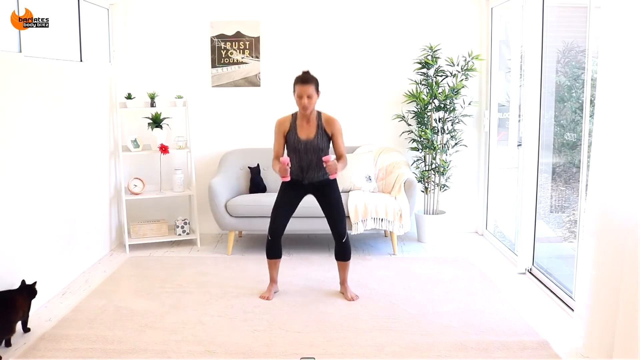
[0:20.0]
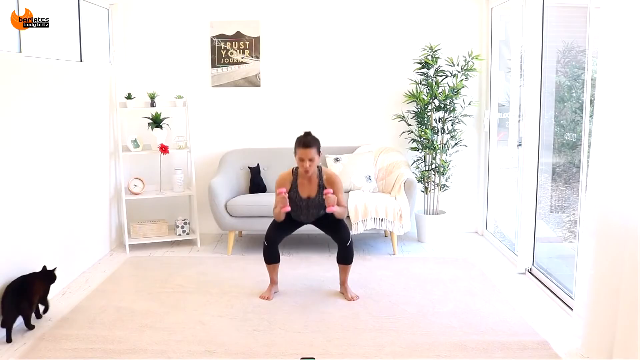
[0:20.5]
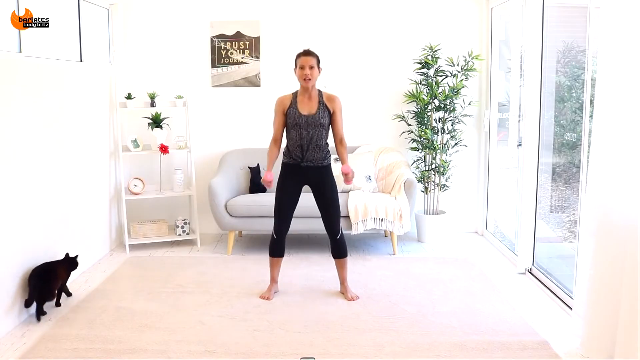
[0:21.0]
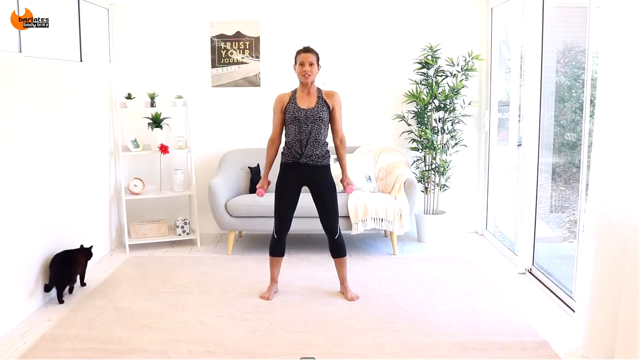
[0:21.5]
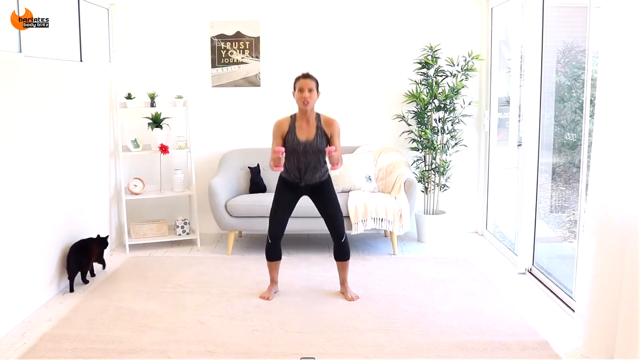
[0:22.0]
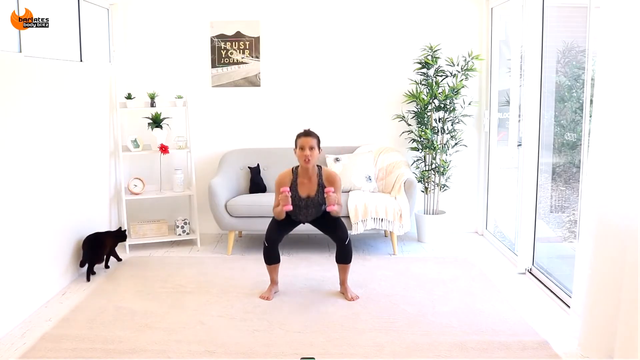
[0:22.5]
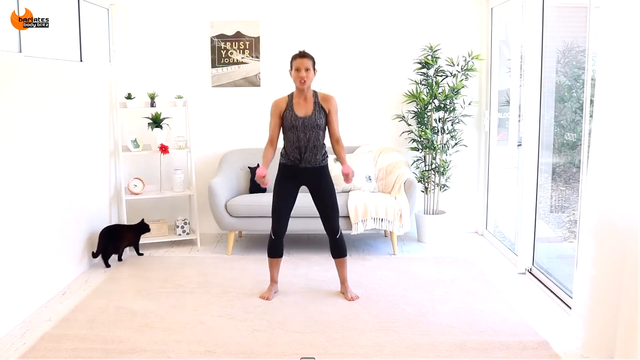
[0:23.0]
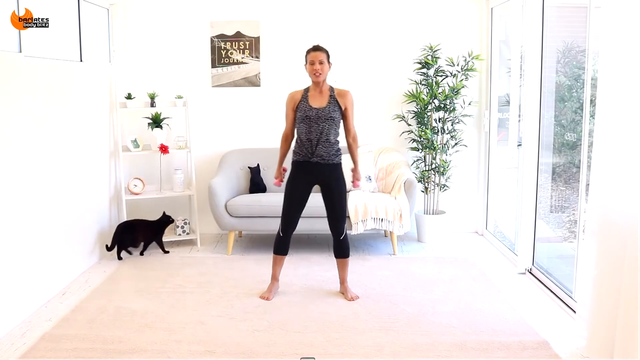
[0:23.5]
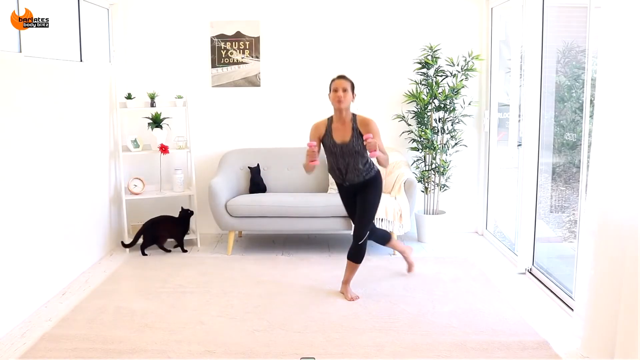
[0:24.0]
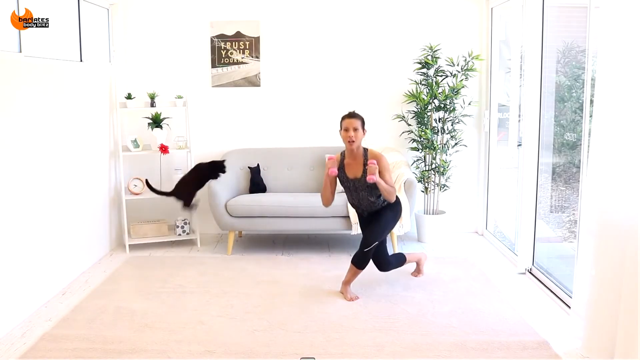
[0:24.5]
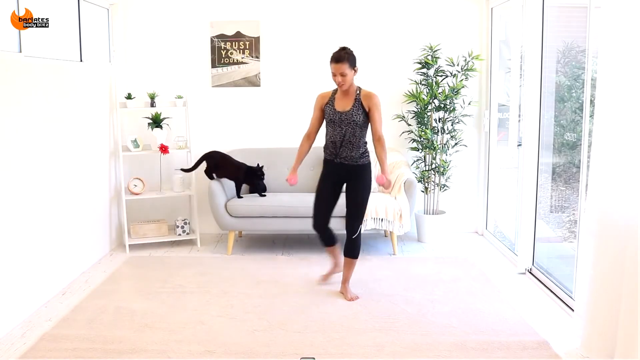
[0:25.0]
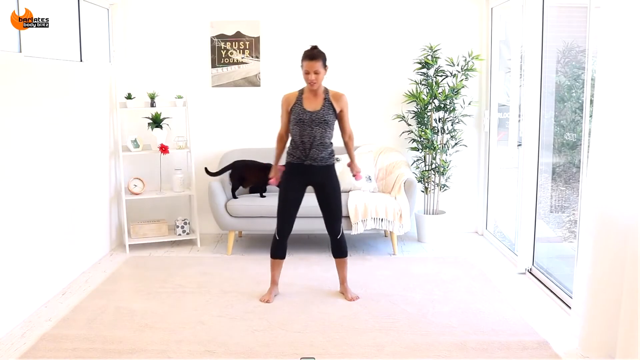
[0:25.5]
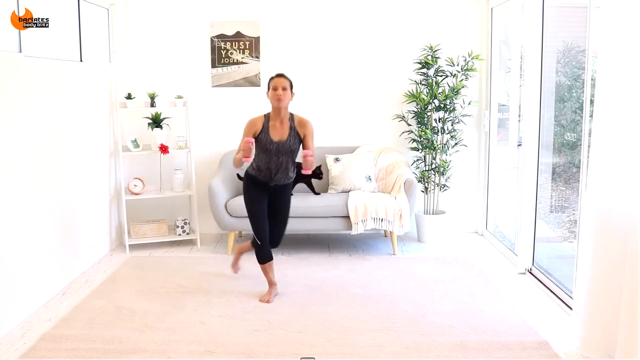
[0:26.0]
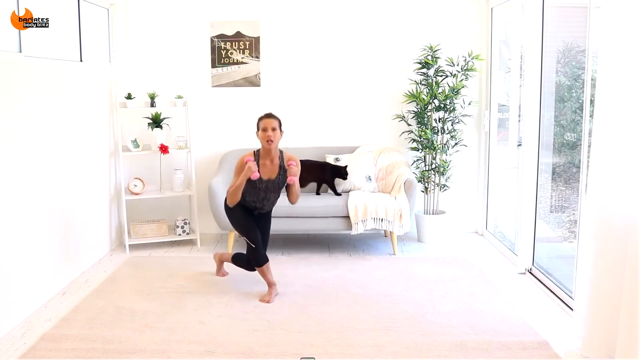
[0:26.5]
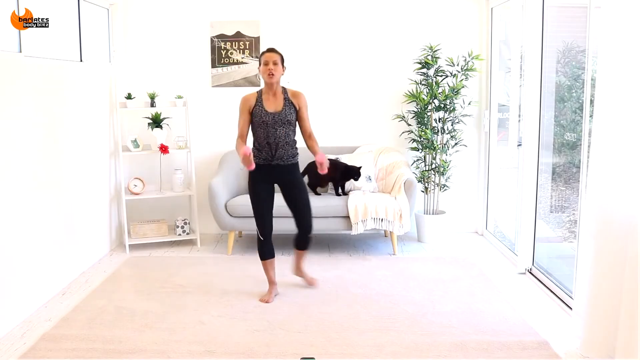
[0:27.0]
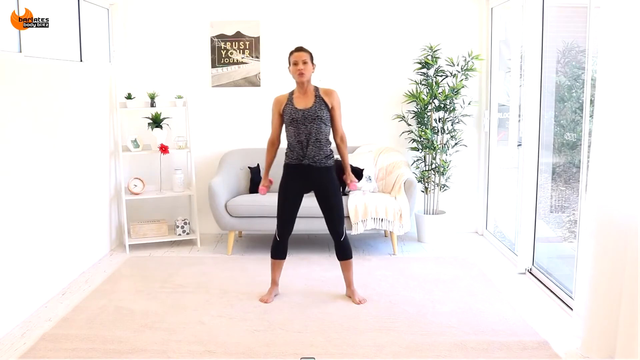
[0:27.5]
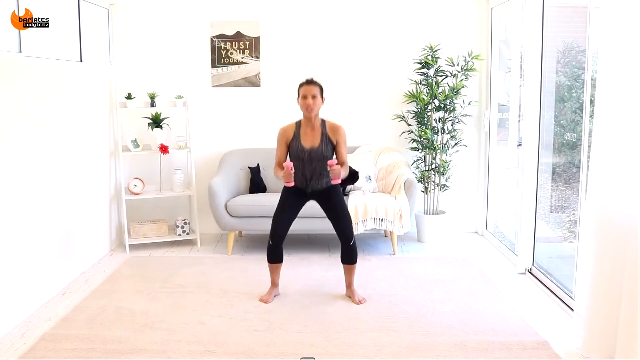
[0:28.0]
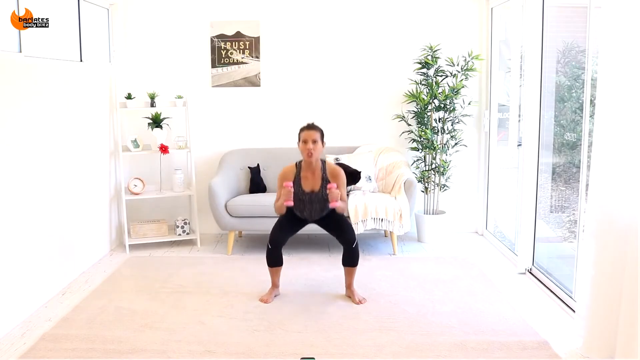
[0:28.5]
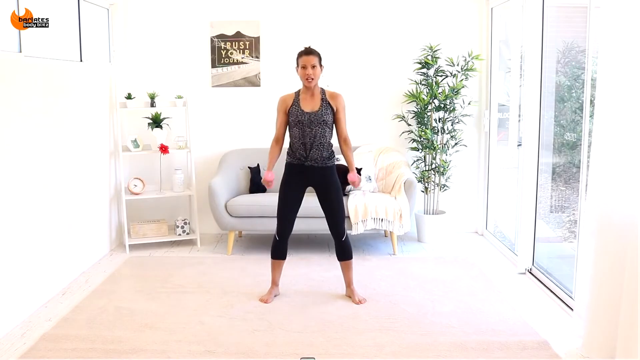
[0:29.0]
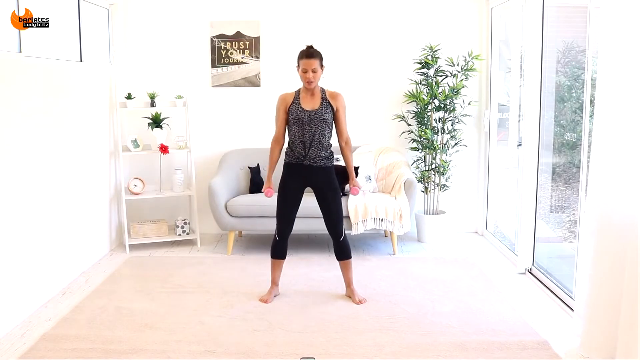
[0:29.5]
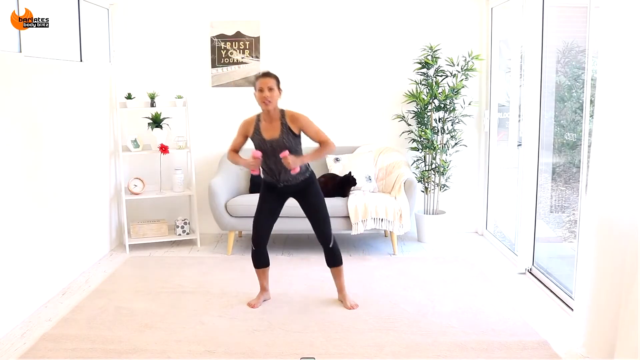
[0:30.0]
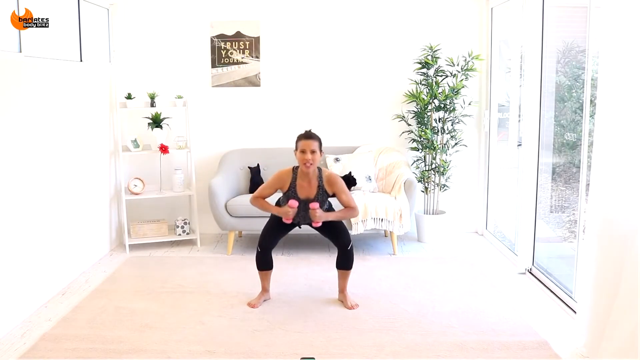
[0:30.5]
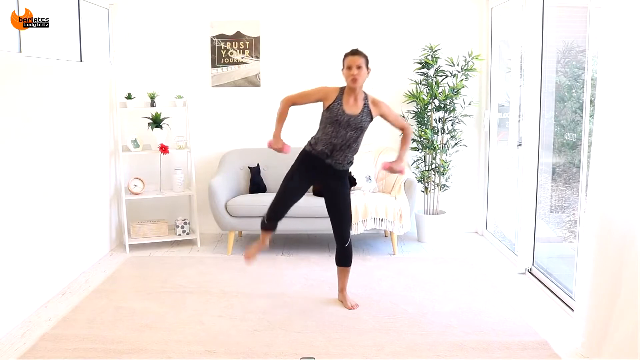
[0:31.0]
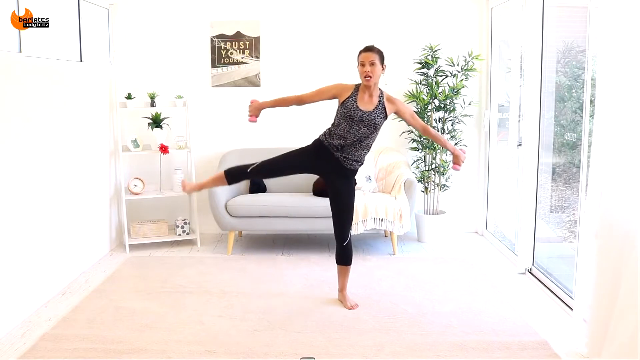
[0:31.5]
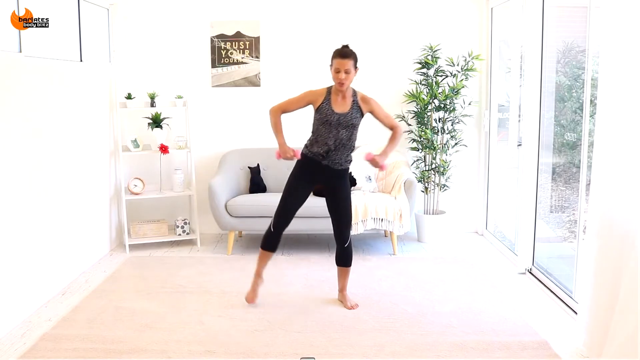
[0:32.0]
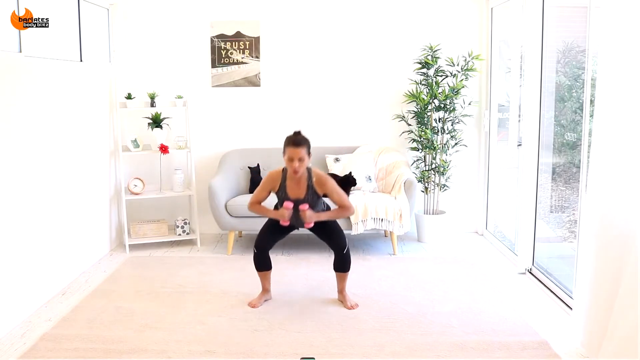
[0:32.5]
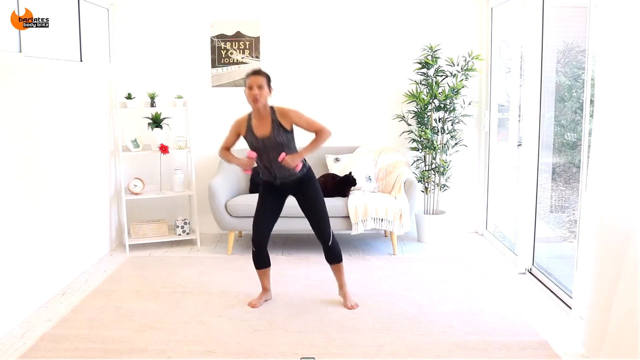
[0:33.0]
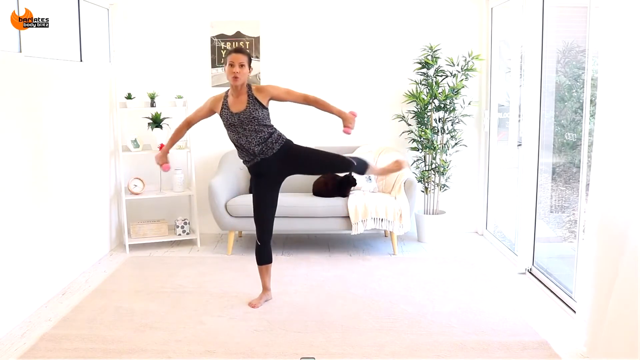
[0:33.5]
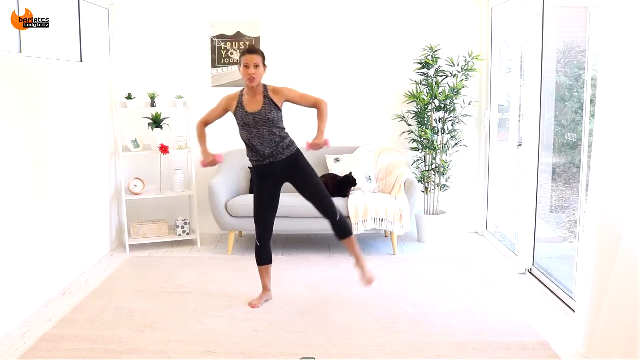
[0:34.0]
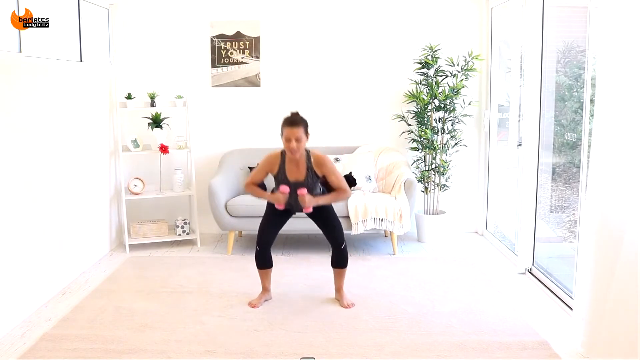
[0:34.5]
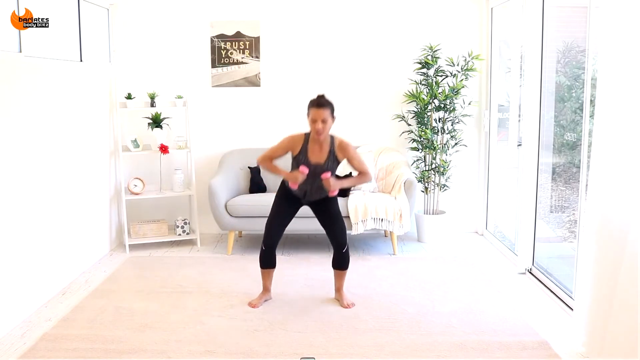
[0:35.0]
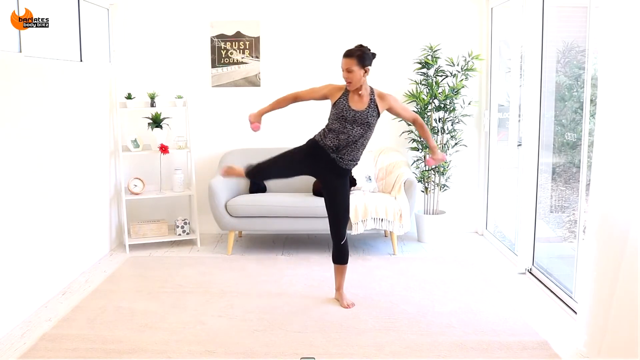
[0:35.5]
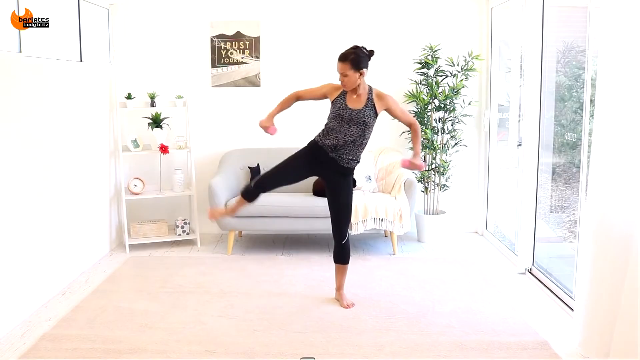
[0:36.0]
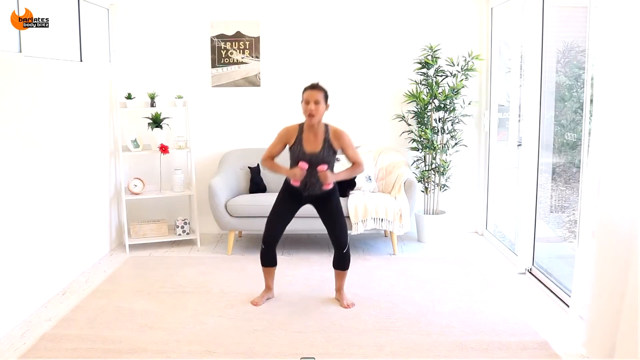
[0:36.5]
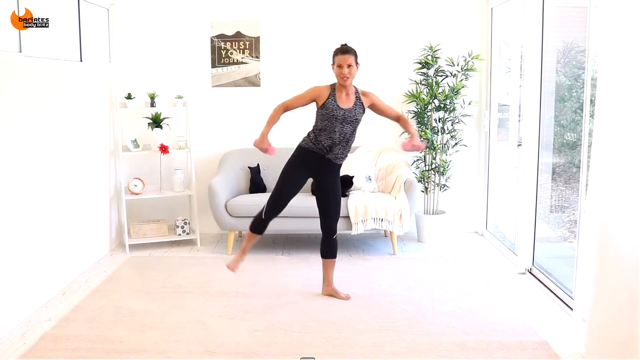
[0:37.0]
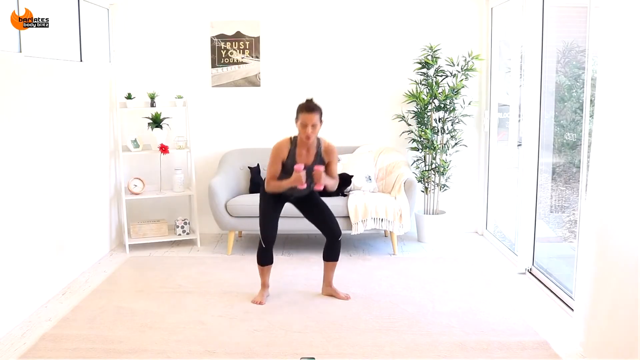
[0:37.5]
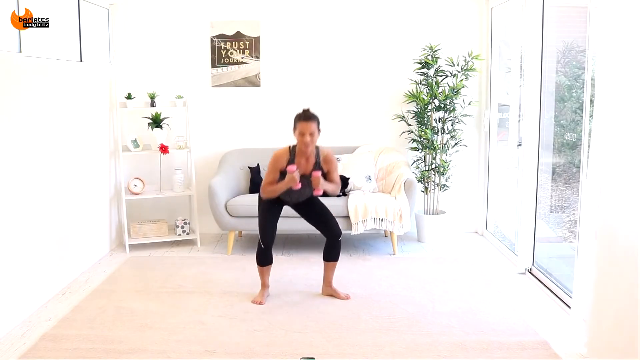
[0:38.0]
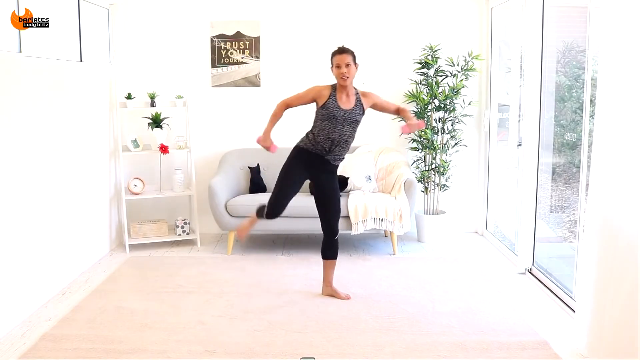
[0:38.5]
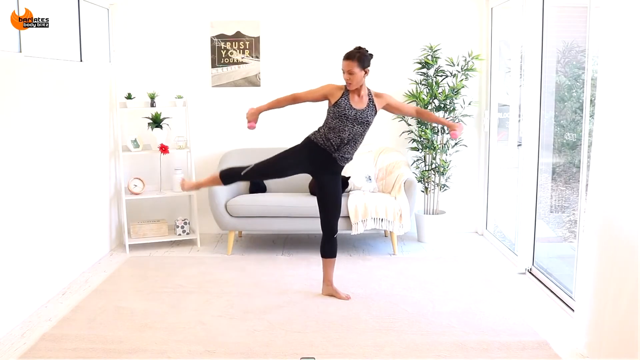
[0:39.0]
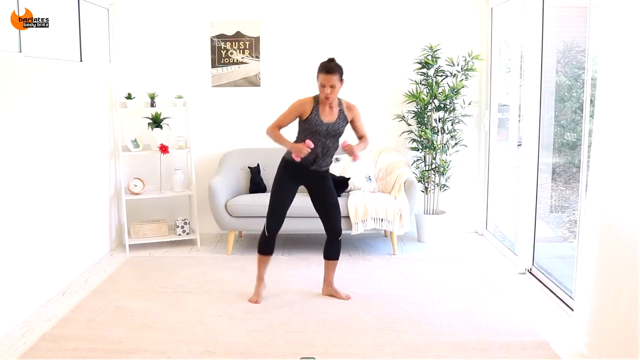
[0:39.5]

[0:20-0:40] A woman in exercise clothing is in the middle of the screen in a bright, airy room with sliding doors on one side, lots of plants, a poster, and a couch in the background. A black cat comes in from the bottom left corner, walks toward the couch and jumps up onto it. Meanwhile the woman, holding two pink weights, does squats. After a few squats she does a side lunge in which one leg goes behind the other and she lunges kind of to the side, comes back to the center, lunges to the other side, and then continues her squats. After a break in the video, she is back in the middle doing side kicks while putting her arms out to the side, still holding the weights. She alternates legs, then focuses on her right side, doing two kicks on just that side.